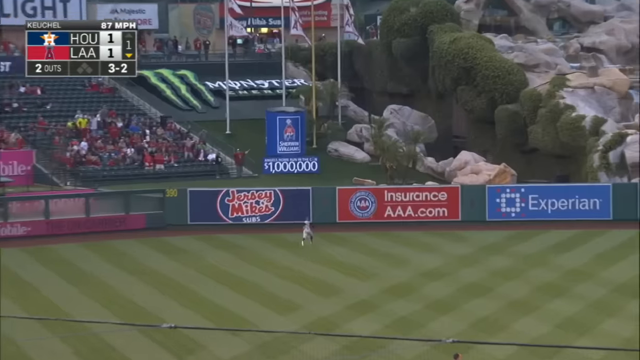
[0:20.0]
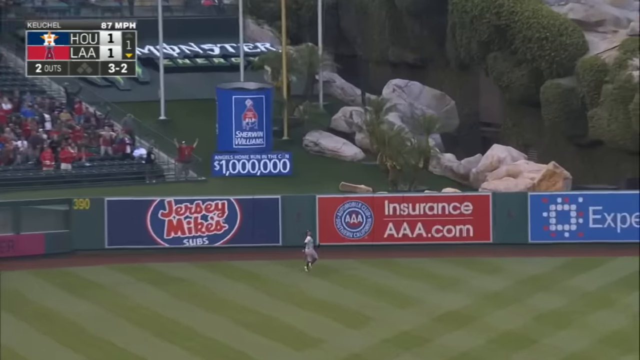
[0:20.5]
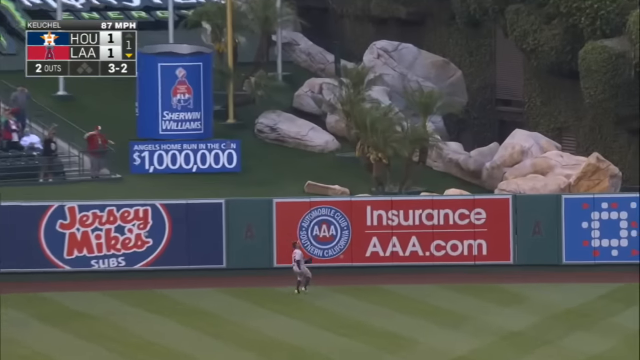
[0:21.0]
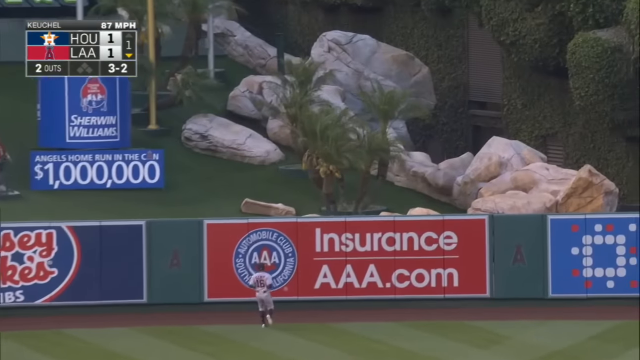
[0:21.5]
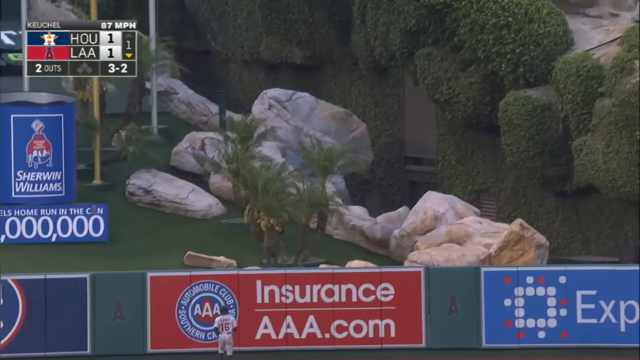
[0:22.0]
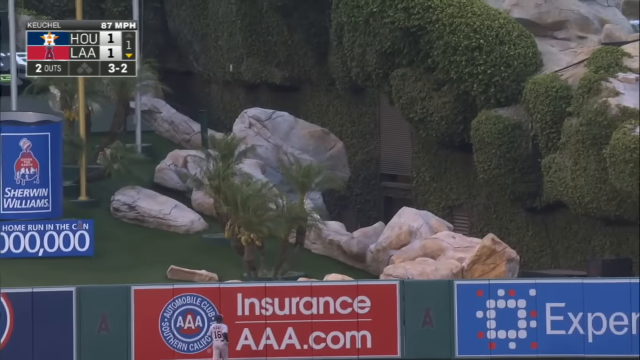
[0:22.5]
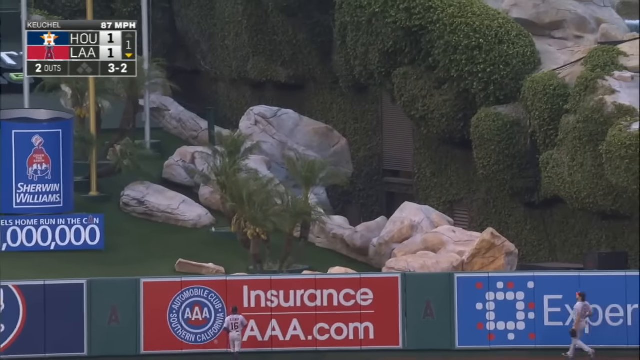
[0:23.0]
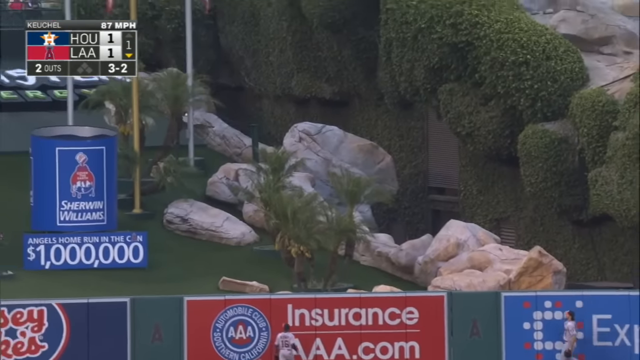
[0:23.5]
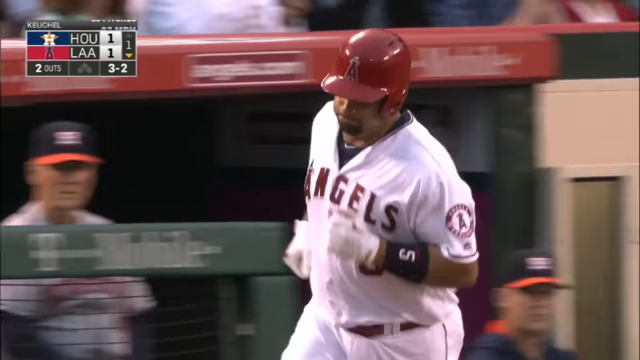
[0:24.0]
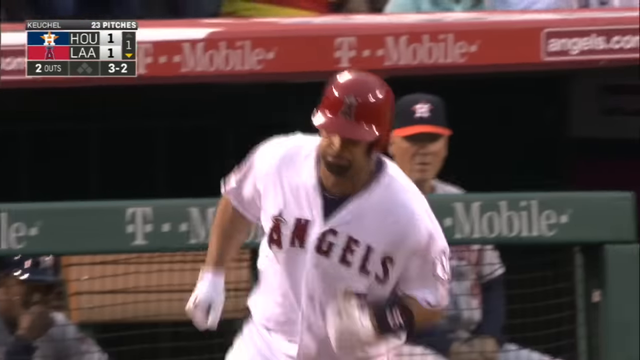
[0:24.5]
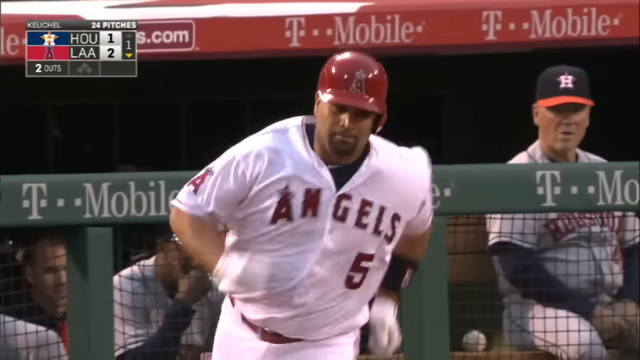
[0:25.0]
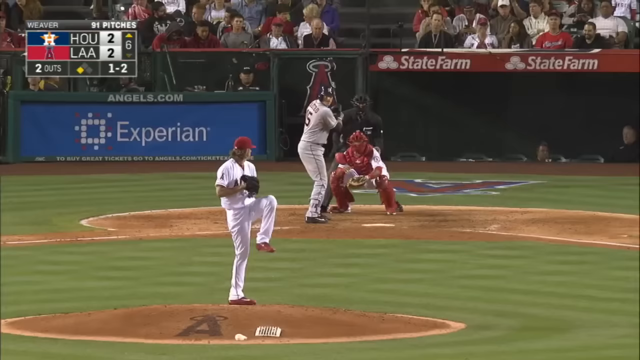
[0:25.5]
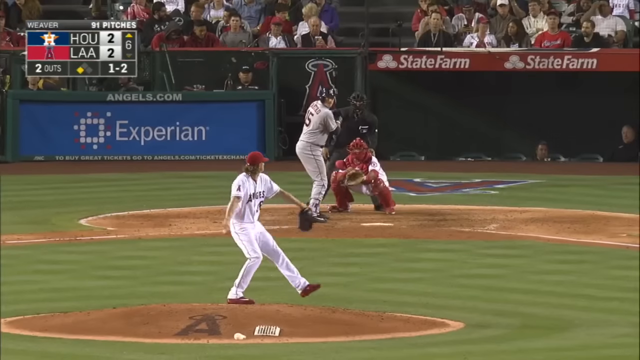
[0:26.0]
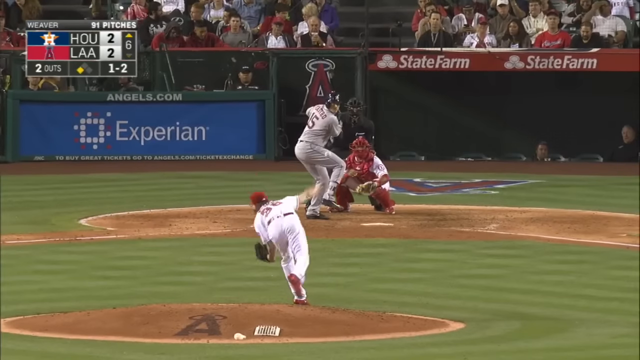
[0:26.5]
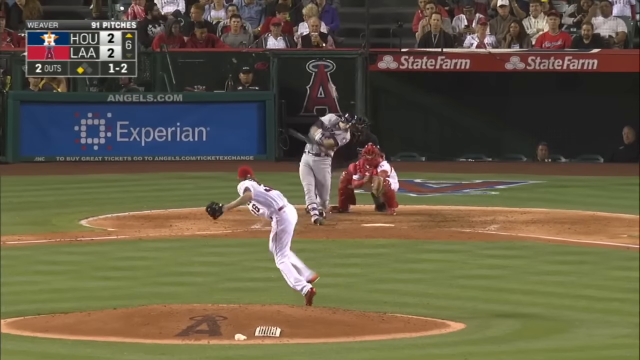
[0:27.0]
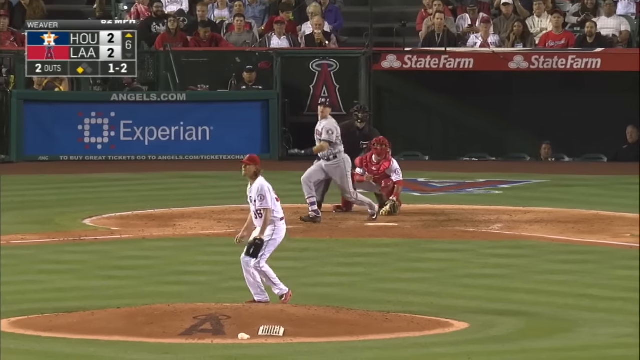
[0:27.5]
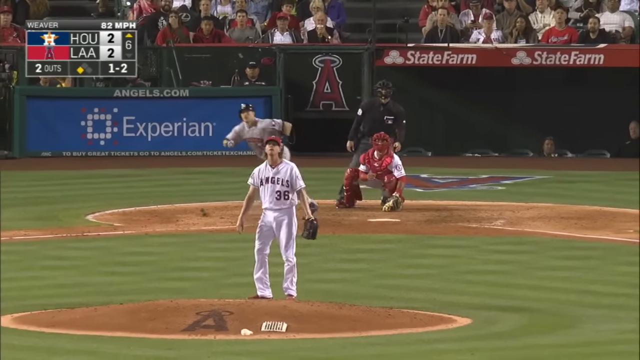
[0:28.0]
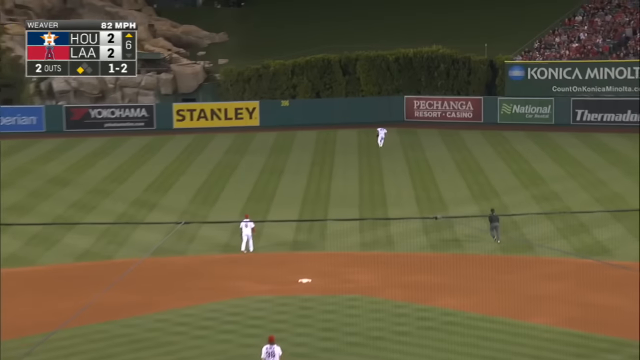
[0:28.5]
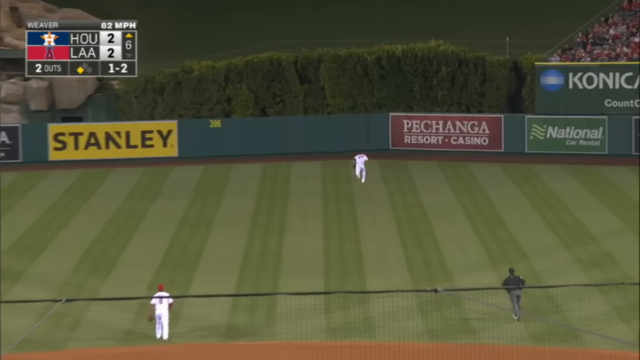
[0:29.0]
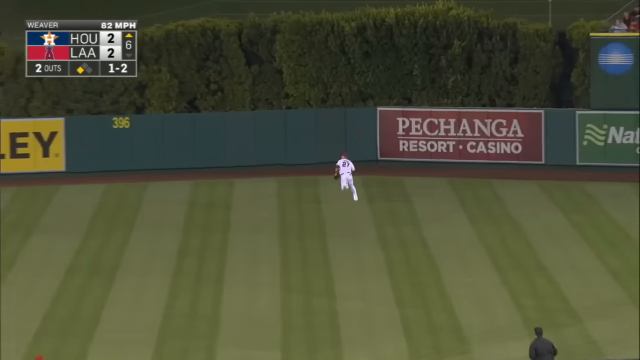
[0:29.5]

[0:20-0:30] A left fielder in a grey jersey slowly jogs back toward the left center field wall, looking up into the sky trying to find the ball. As he approaches the warning track, he slows down and looks toward the wall as the ball flies over it, out of his reach. The ball lands about 20 feet behind the wall and bounces on a rock. The scene transitions to a player in a white jersey with red letters rounding first base at a medium jogging pace. Next, a pitcher on the mound holds the ball at his waist in his right hand, then winds up and throws it toward home plate. The batter in a grey jersey swings and hits the ball high into center field, and the center fielder begins running back, looking up into the sky.